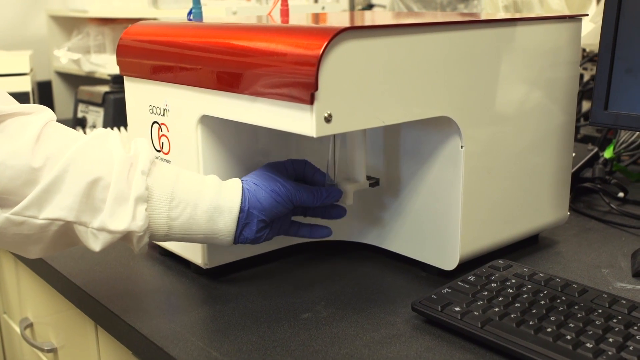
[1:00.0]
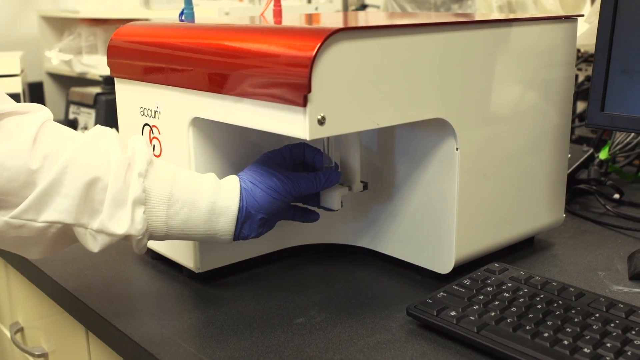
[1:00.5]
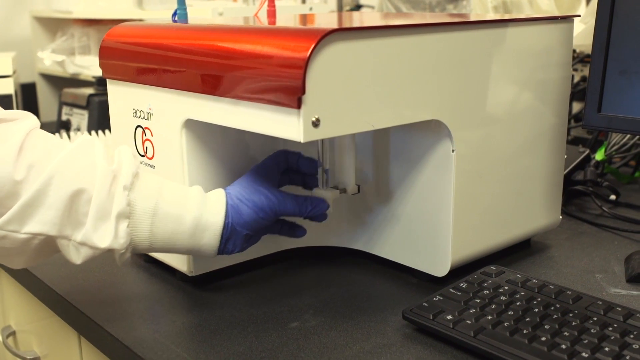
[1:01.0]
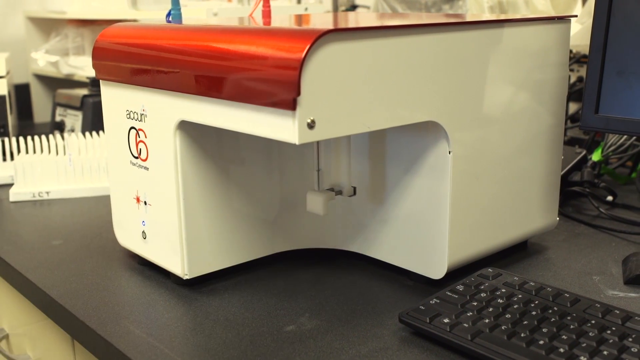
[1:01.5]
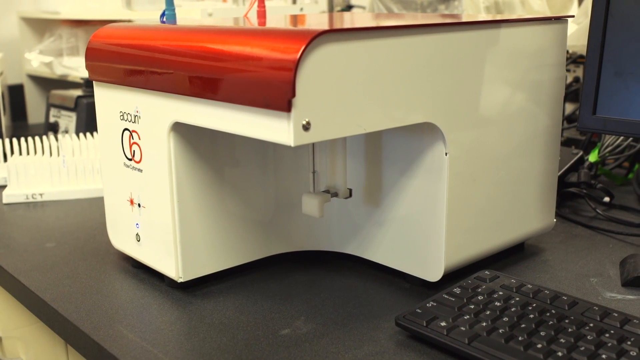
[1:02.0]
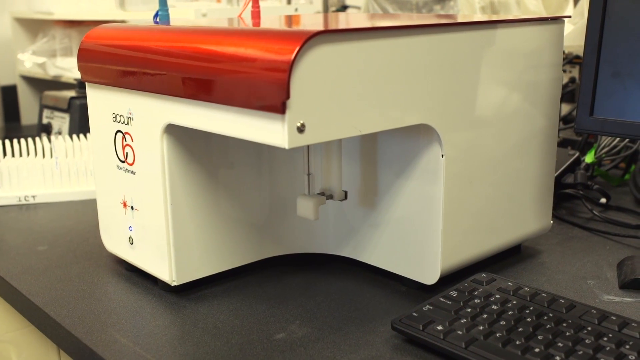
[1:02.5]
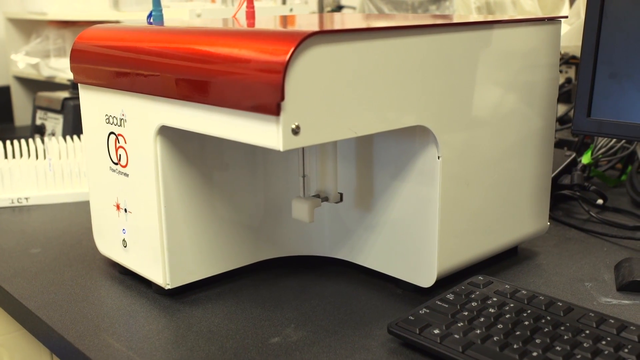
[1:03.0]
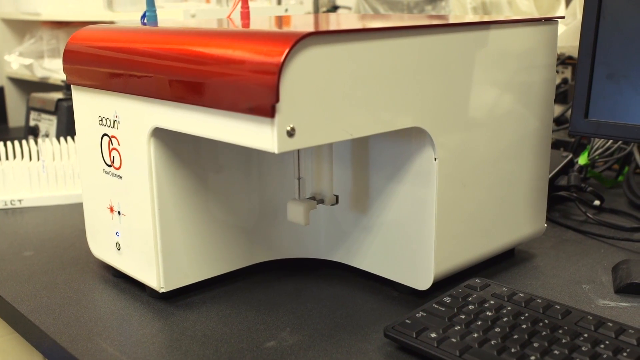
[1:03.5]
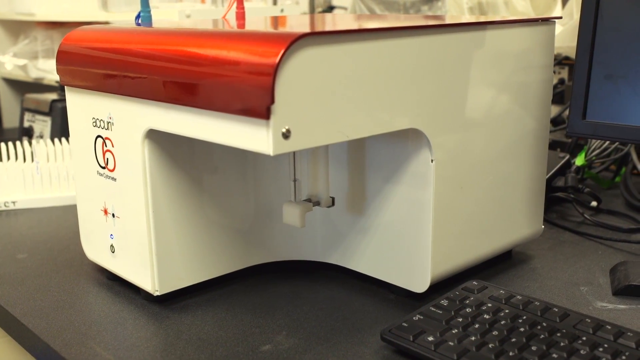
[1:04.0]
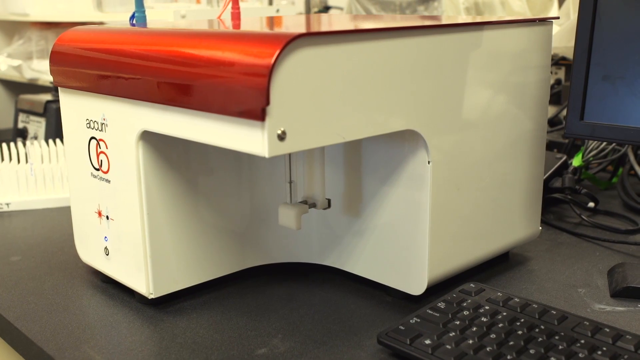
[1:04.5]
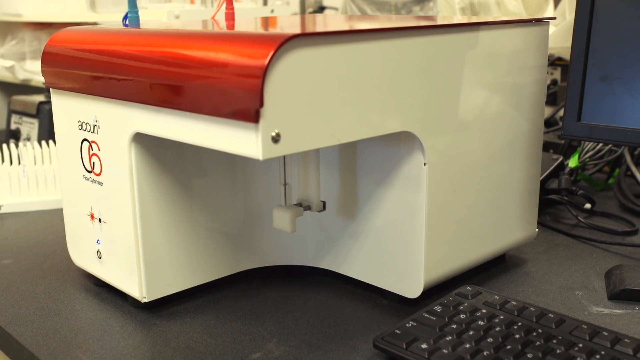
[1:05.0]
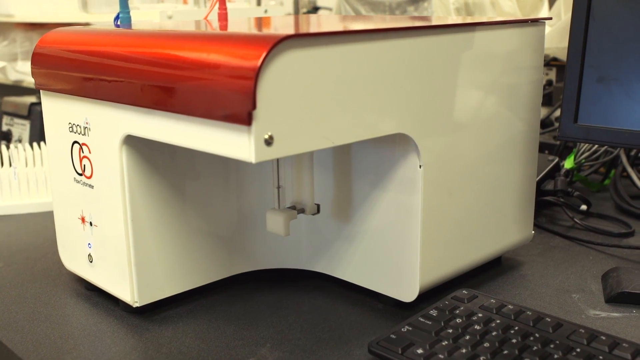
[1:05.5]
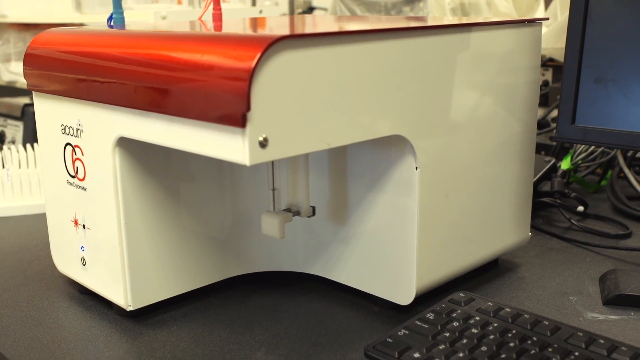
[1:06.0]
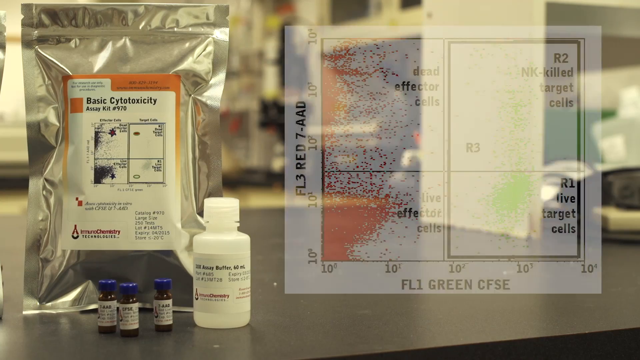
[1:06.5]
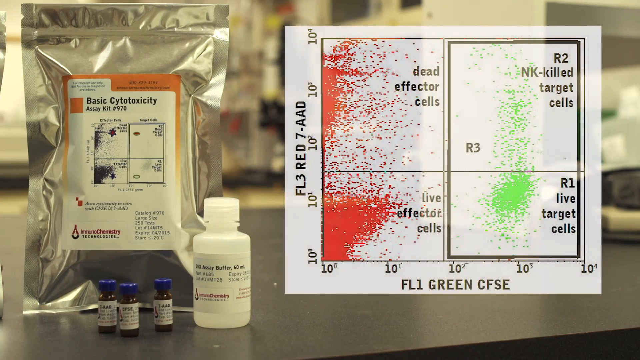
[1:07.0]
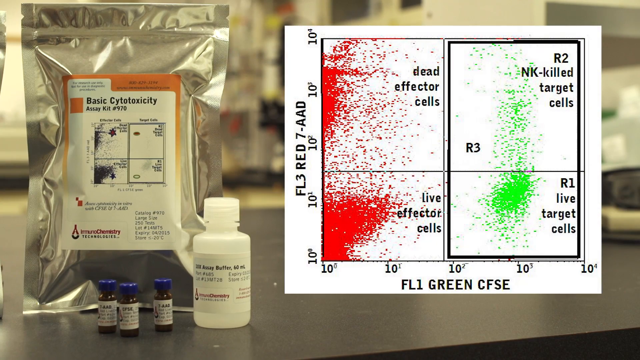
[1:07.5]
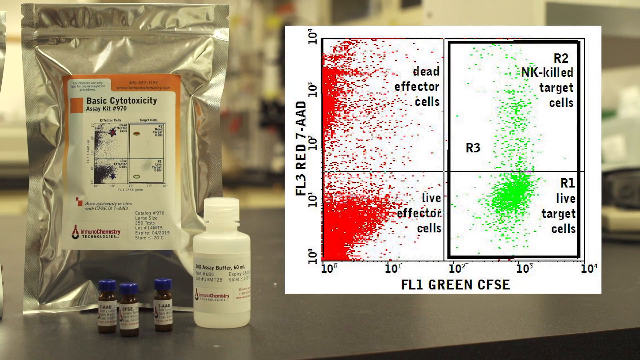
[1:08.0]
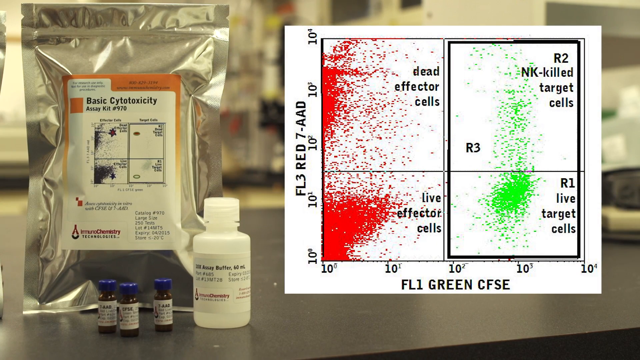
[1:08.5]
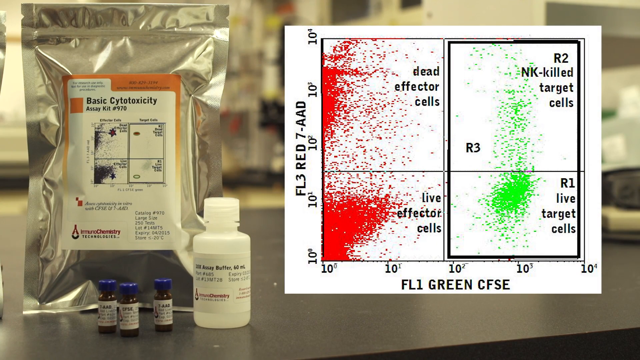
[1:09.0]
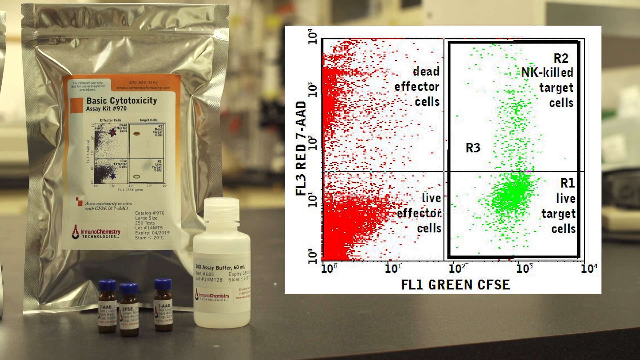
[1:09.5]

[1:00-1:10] In a lab, a tube is put underneath a white machine with a red lid, in a small area right underneath it where the vial of substance goes. The machine apparently gives a readout on what is inside the vial. The next screen shows the results, listing "dead effector cells" and "live effector cells", and on the R2 side, "target cells" and "live target cells".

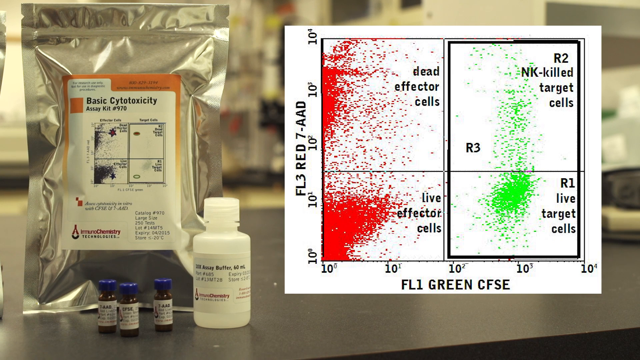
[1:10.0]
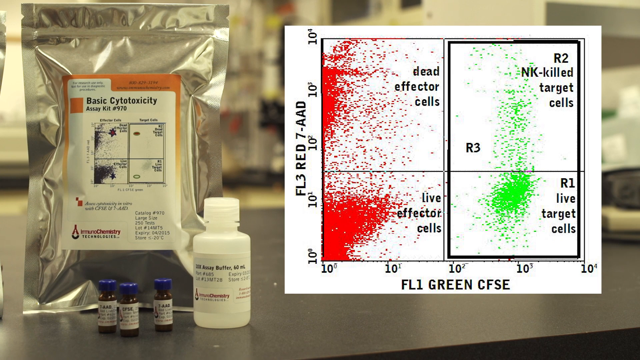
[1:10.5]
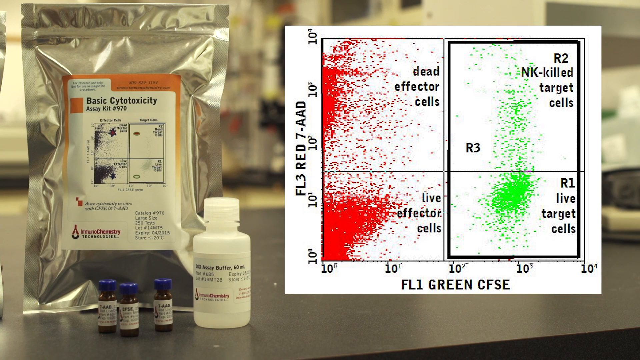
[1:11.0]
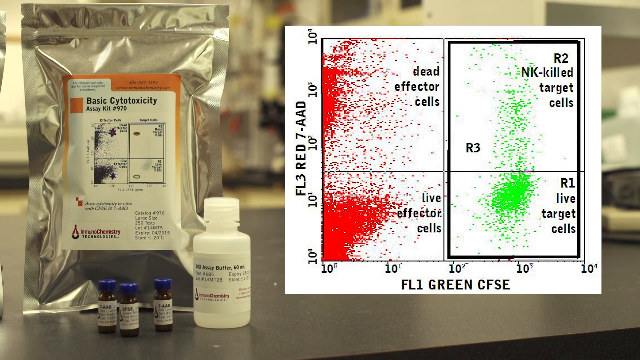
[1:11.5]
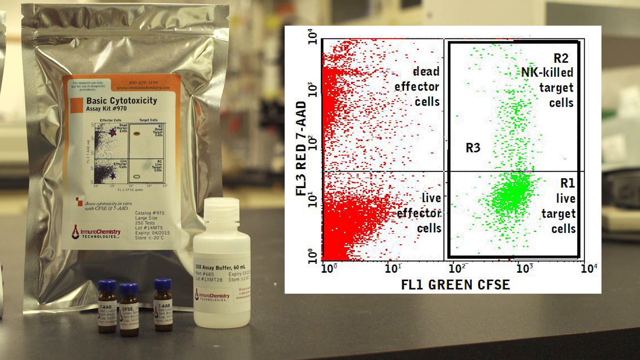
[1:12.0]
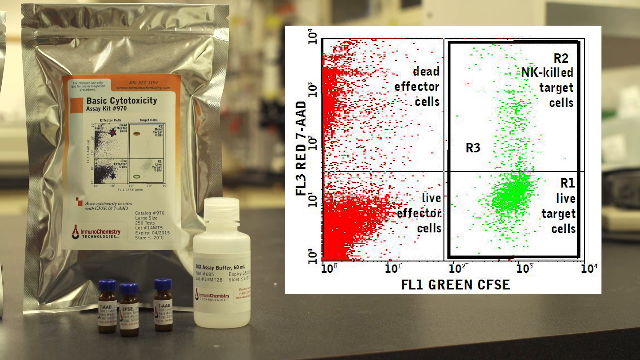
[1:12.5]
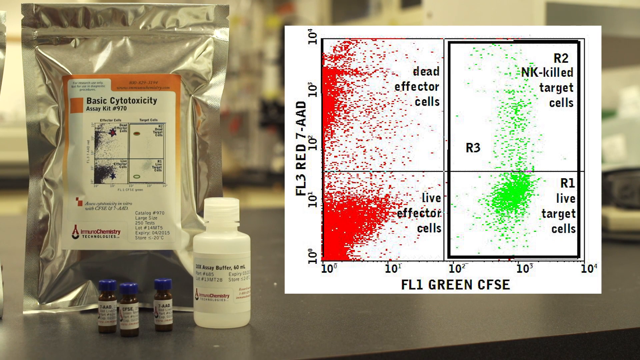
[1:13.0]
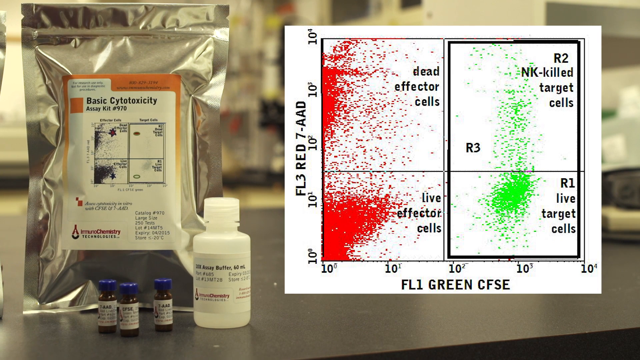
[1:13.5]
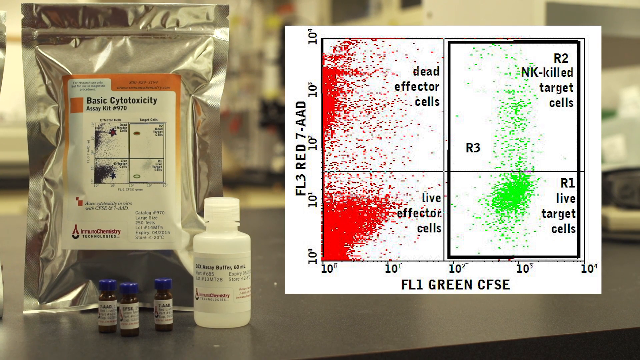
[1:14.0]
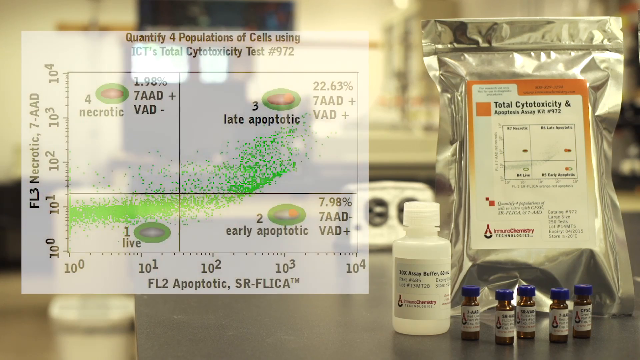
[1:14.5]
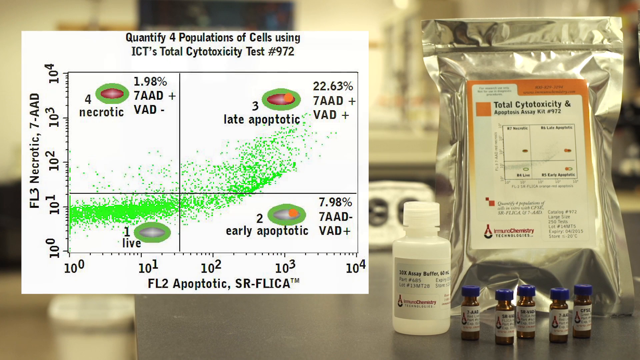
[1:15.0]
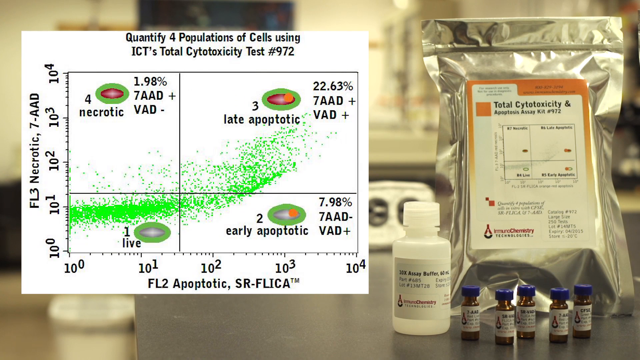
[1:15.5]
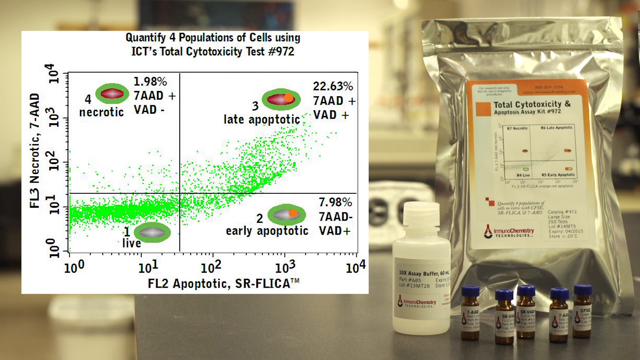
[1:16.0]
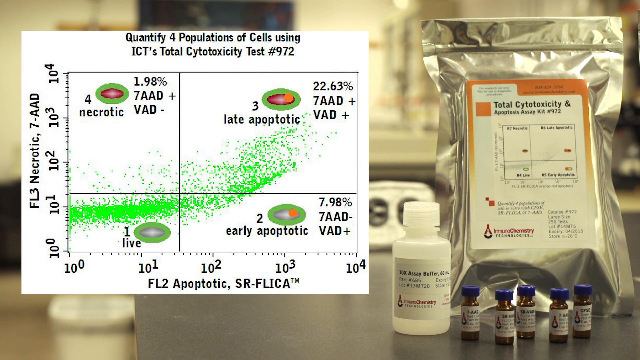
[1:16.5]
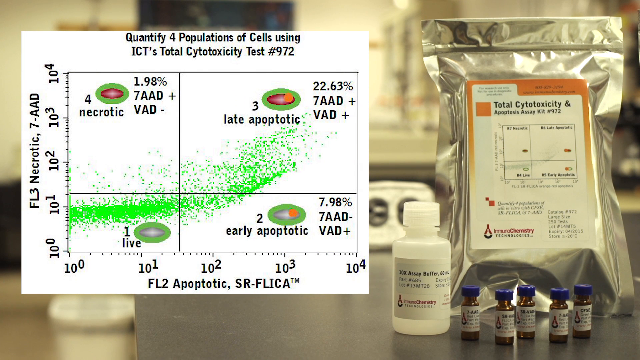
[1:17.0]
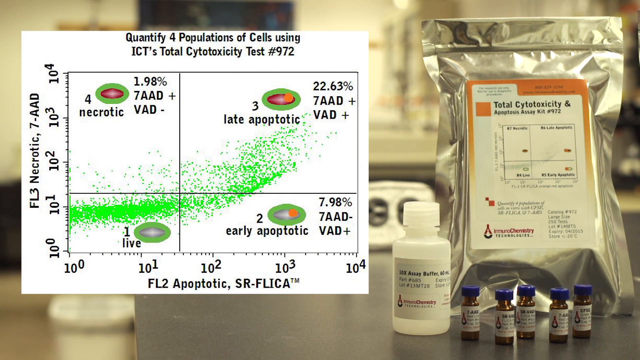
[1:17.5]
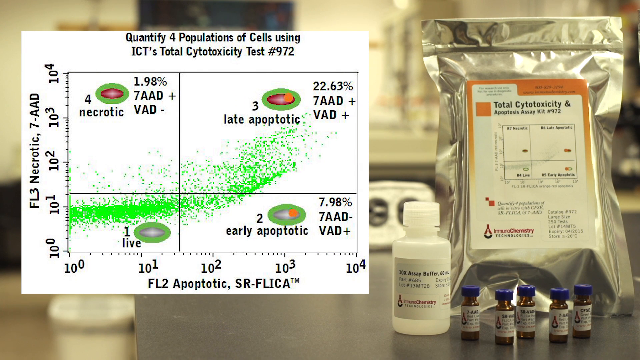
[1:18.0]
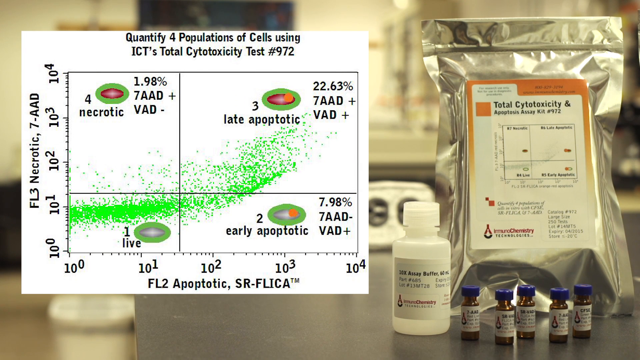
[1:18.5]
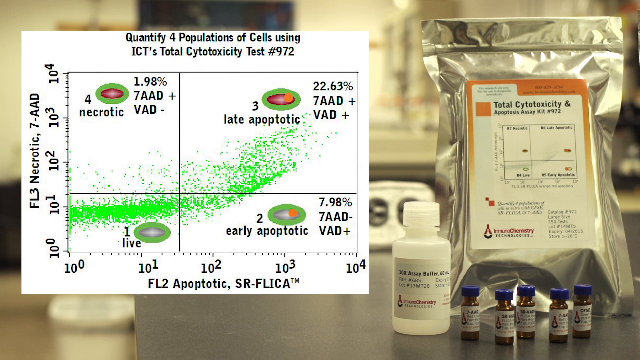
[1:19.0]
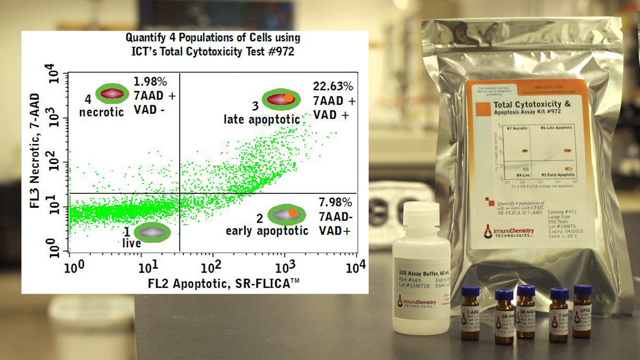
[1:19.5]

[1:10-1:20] A machine's readout from testing a liquid in a vial is shown. Written on the lower part of the readout is "FL1 green CFSE", and on the left side is "FL3 red 7-AAD". To the left are containers: a white container with a screw-top lid, small brown vials with blue screw-top lids, and a vacuum-sealed aluminum package holding the product as well. The readout apparently came back positive, showing dead effector cells, live effector cells, target cells and live target cells.